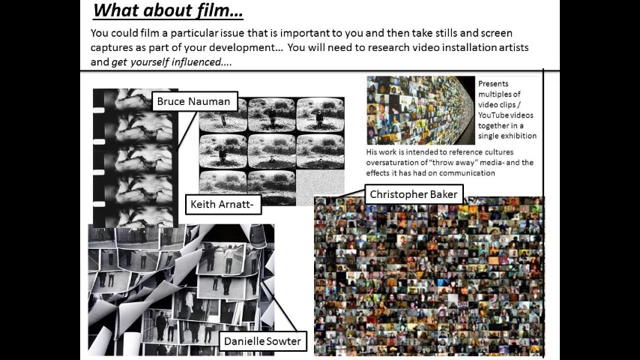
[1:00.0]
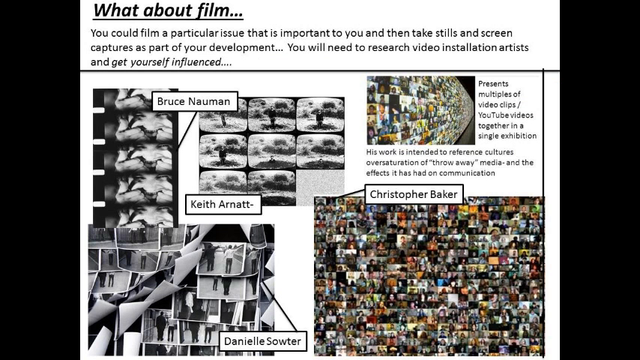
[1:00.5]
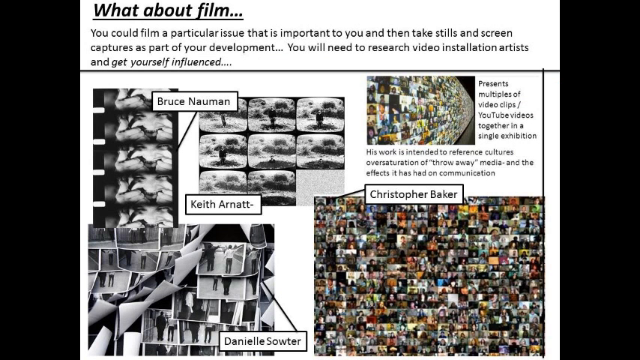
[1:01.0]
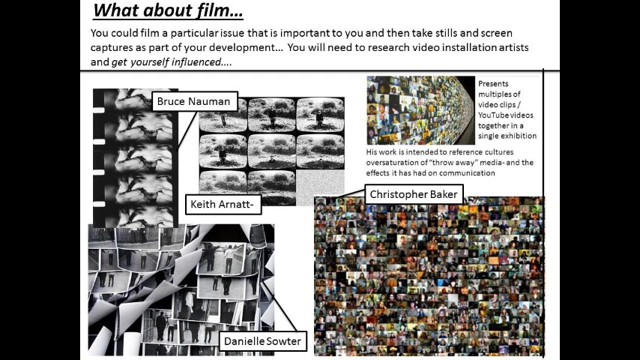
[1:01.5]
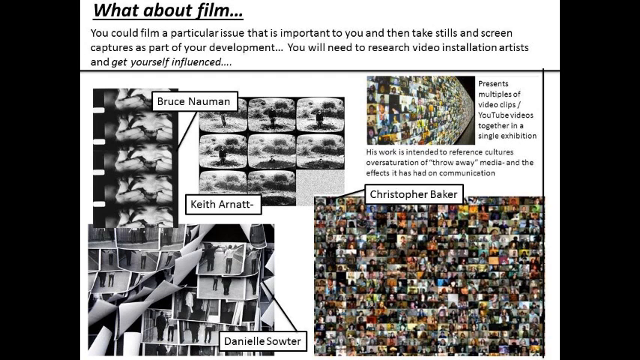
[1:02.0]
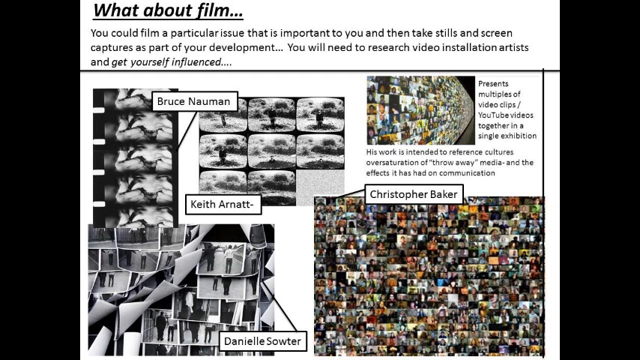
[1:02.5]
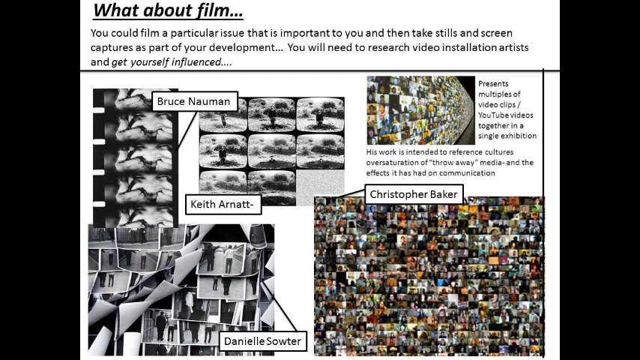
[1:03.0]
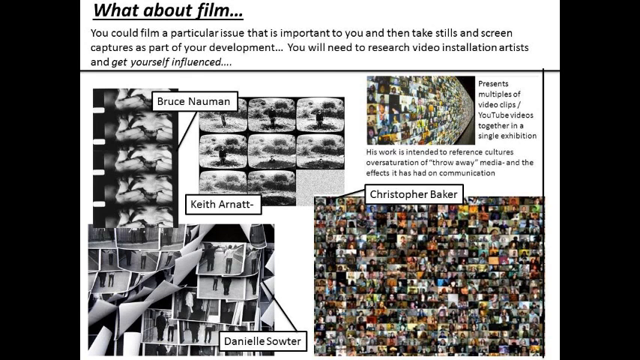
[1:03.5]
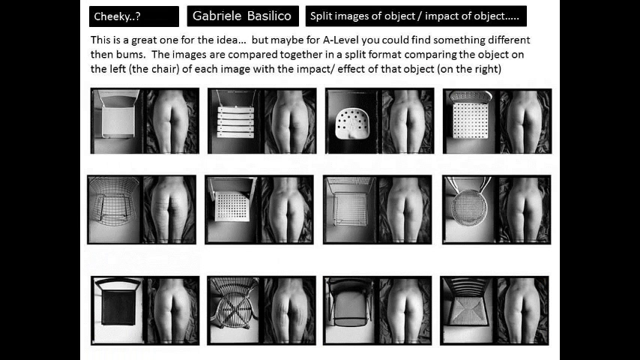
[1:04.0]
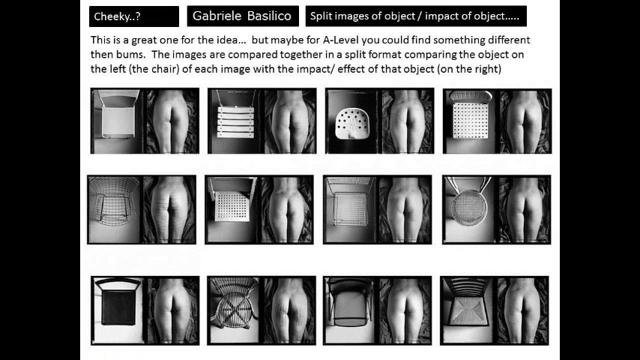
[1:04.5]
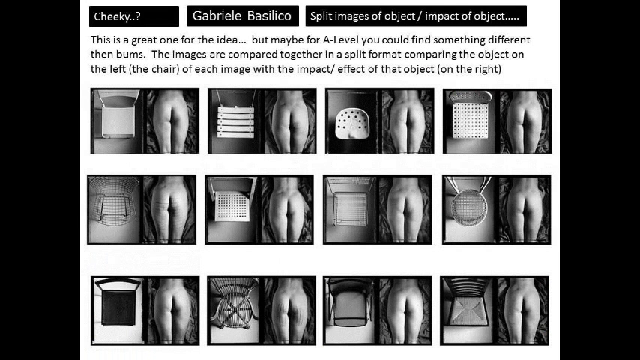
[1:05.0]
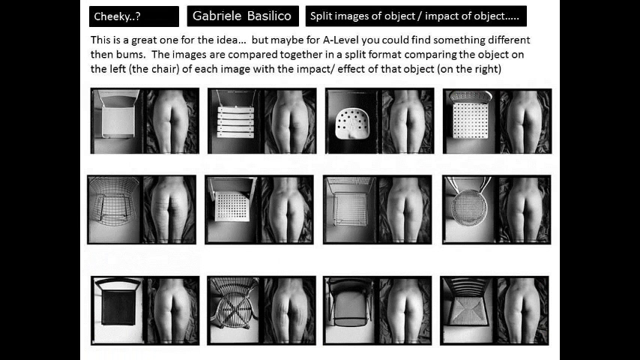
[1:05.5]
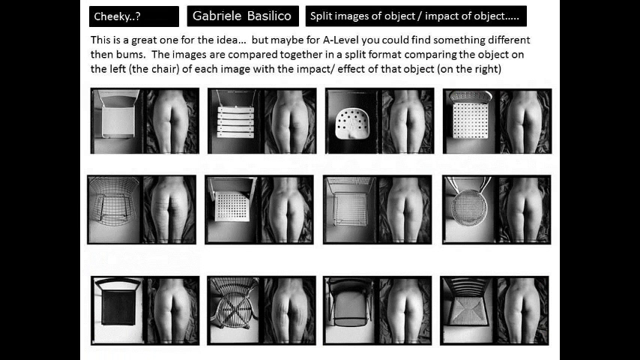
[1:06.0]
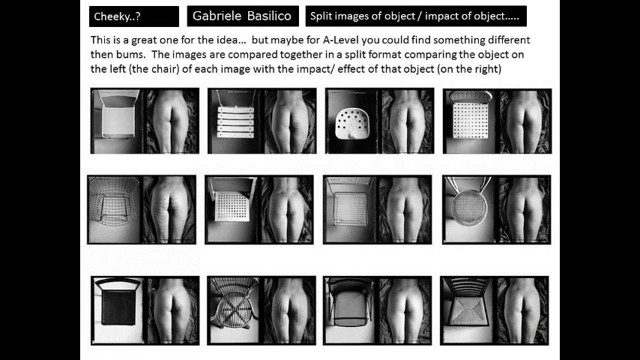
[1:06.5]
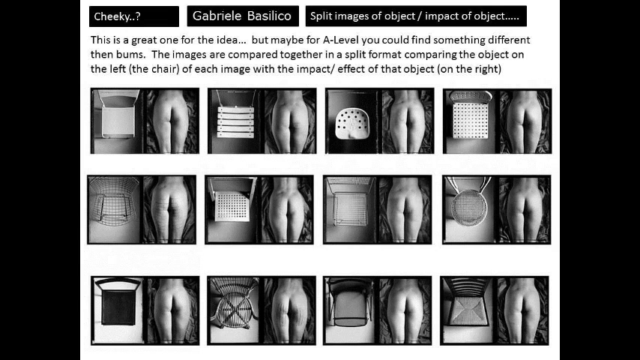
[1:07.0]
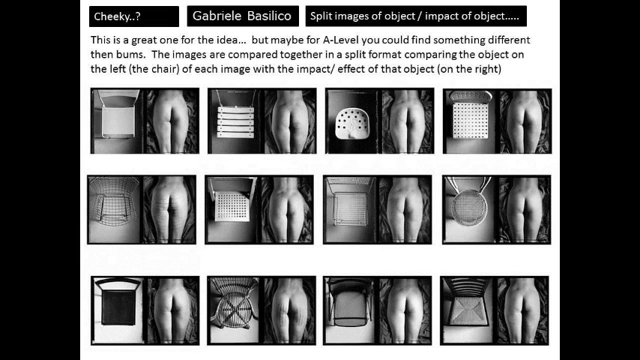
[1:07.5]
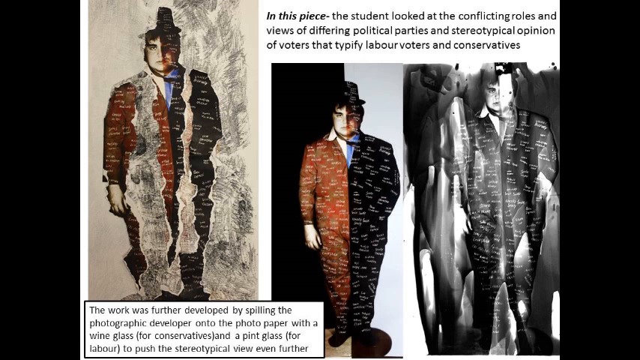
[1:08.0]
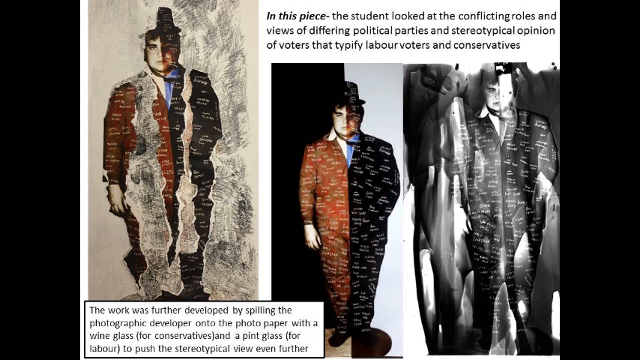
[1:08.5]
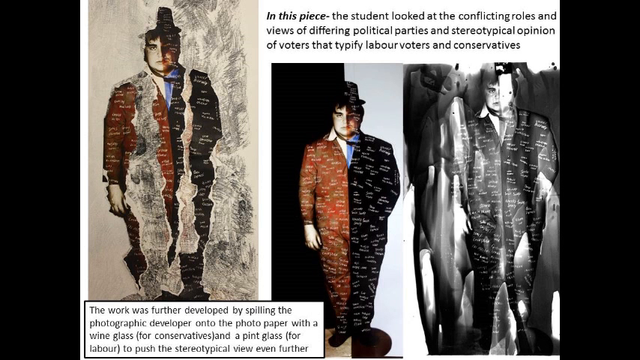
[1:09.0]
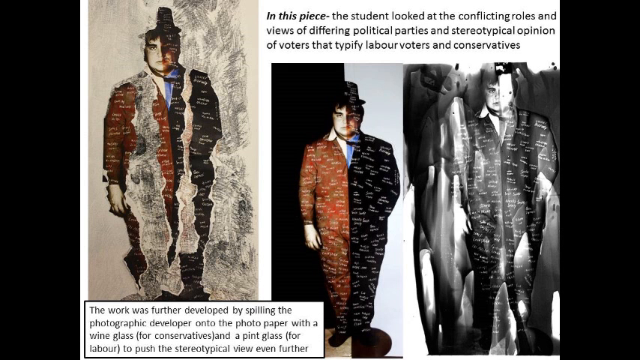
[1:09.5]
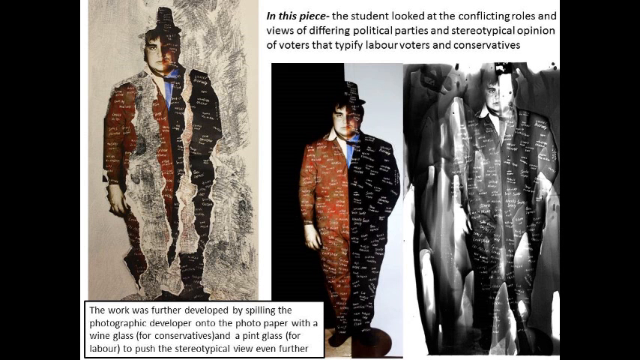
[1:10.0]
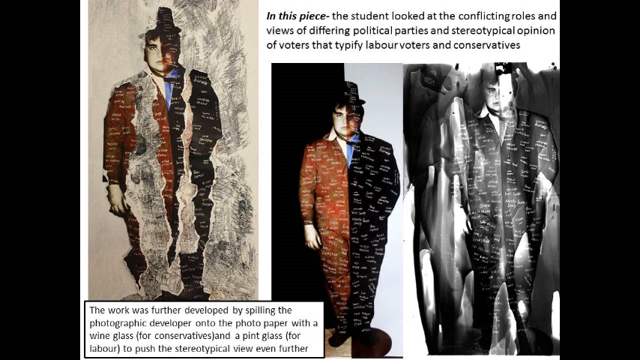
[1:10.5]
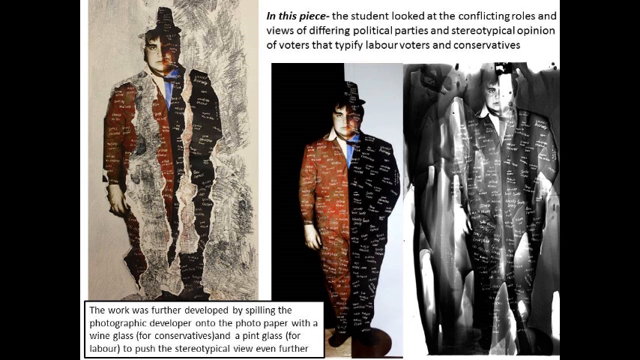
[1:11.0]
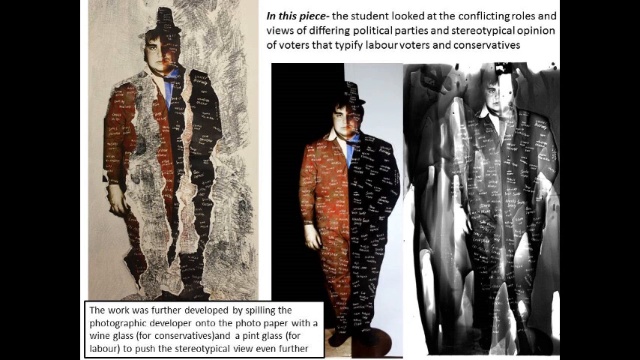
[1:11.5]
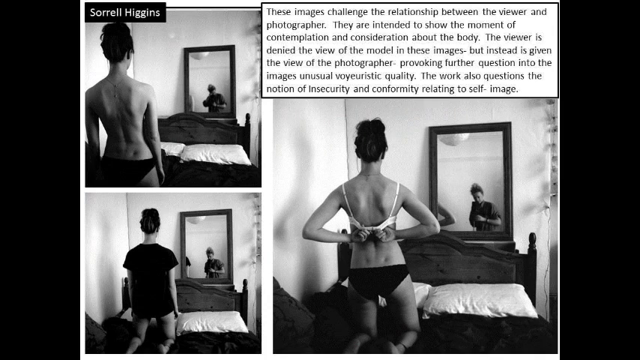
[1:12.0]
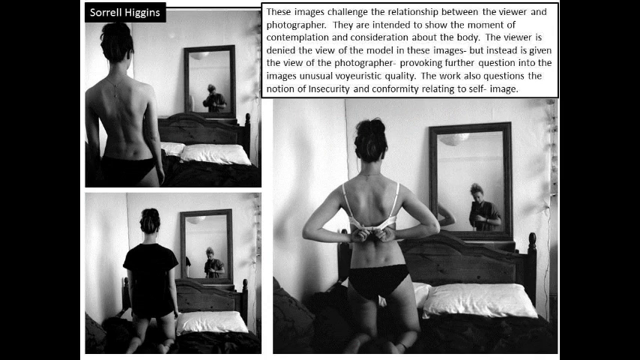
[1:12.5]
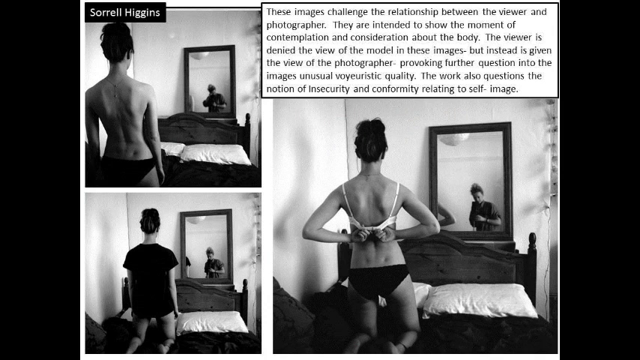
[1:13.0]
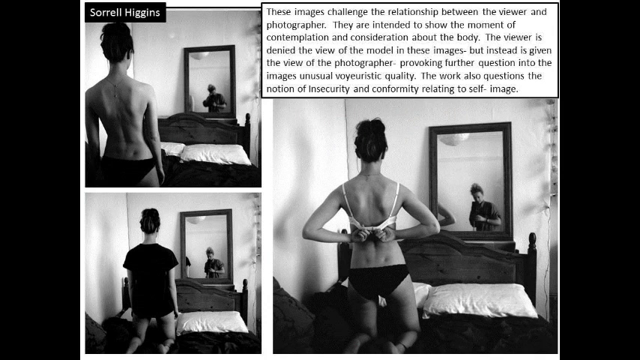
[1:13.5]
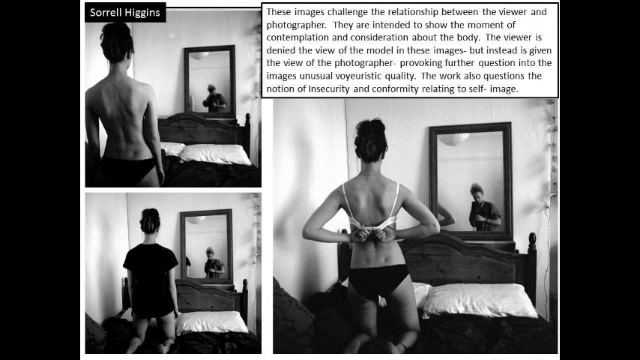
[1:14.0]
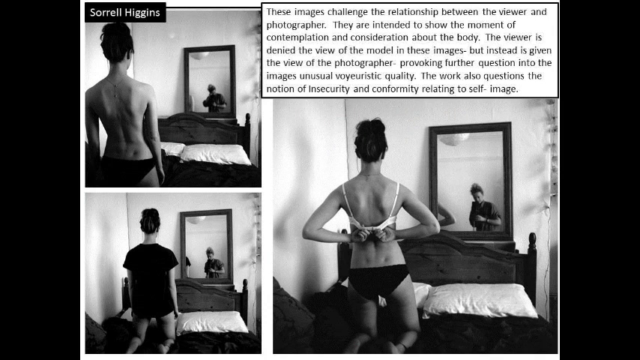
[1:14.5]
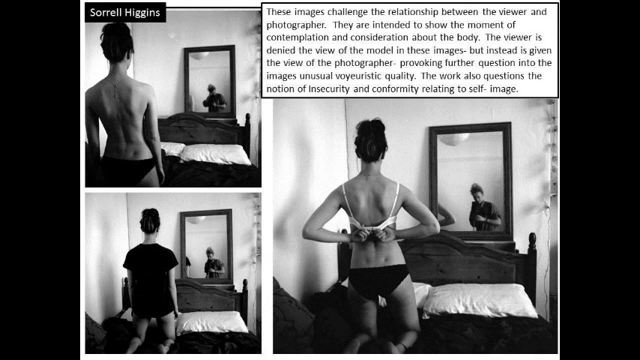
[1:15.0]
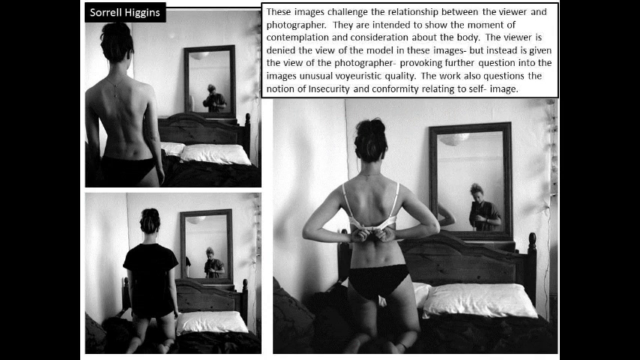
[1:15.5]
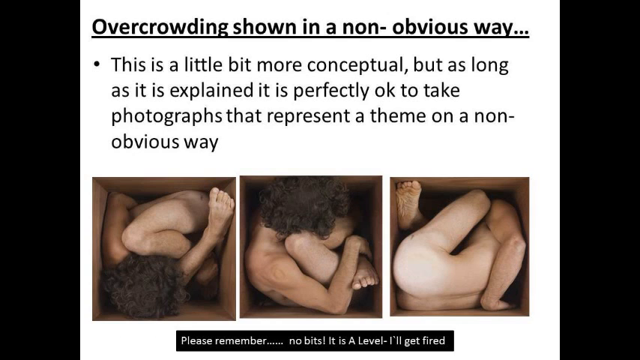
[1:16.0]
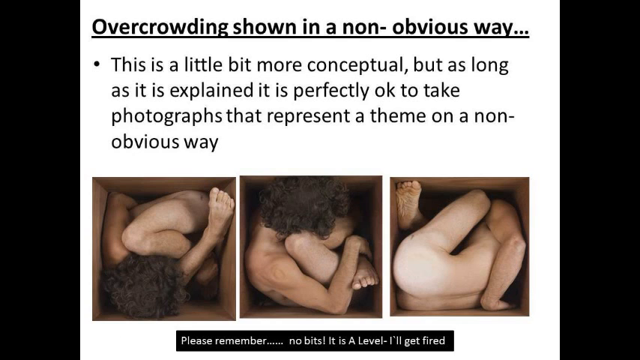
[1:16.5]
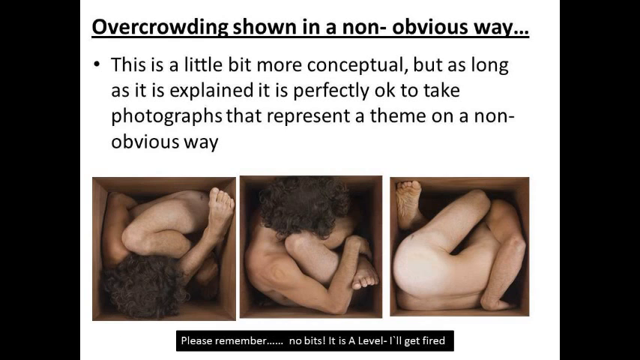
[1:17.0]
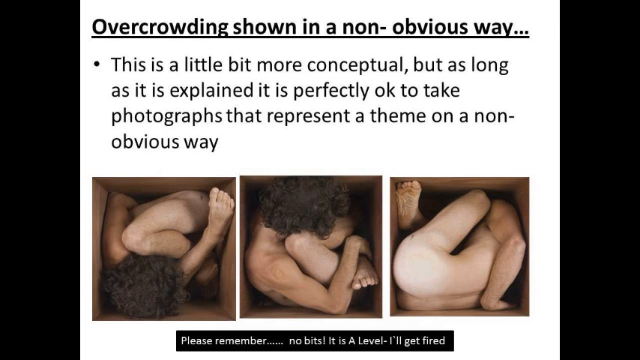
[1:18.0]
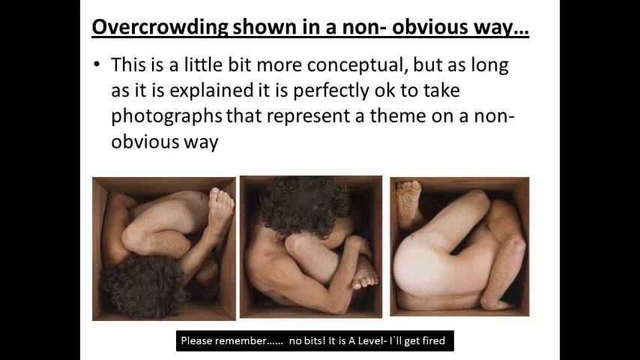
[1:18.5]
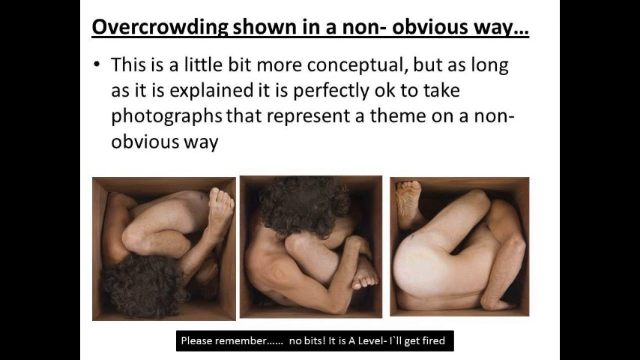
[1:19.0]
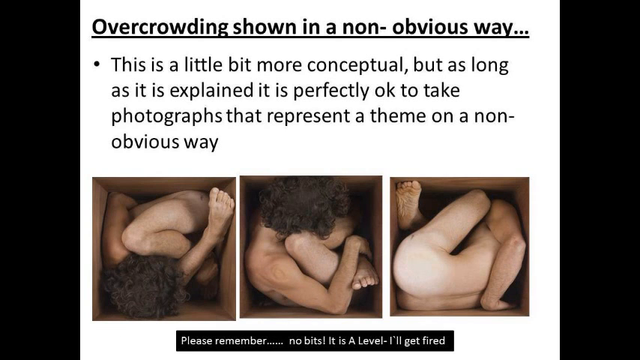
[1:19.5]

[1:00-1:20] Text at the top says "what about film", and the description below reads "you could film a particular issue that is important to you and take stills and screens and screen captures as part of your development, you will need to research video installation artists and get yourself influenced". A stack of photos by Bruce Norman and Kitta Arnott is shown, along with a collage photograph by Christopher Baker. The next slide has photographs of the back view of a woman's lower body and buttocks. At the top are texts on black backgrounds: the first says "Cheeky", the second "Gabriel Basilico", and the third "Split Images of Object, Impact of Object". A title says "This is a great one for the idea. Maybe for A-Level you could find something different." and then "Arms". The images are compared to each other, each showing the object with the impact effect of that object on the right. The following screen shows a drawing of a man in a suit; the suit is split into black and red and split again into what look like pierced parts. The next screen shows a woman wearing underwear in one image, taking off underwear in another, and dressed in another. Another photograph shows a human body in a box, with the title "overcrowding shown in an unobvious way" and the description "this is a little more conceptual, but as long as it is explained, it is perfectly okay to take photographs that are presented in an unobvious way".